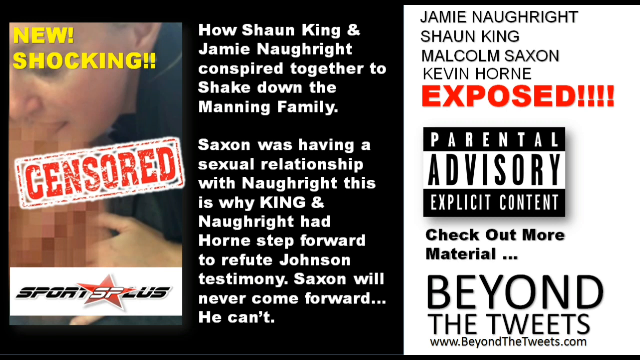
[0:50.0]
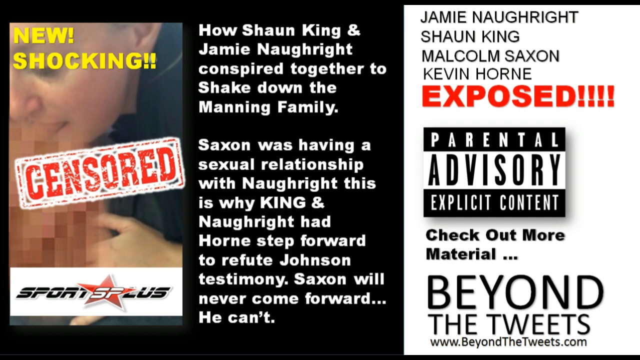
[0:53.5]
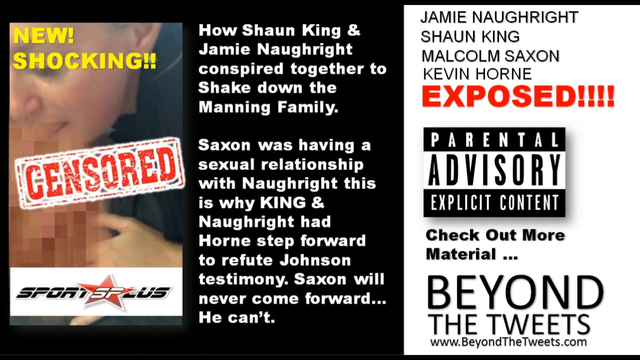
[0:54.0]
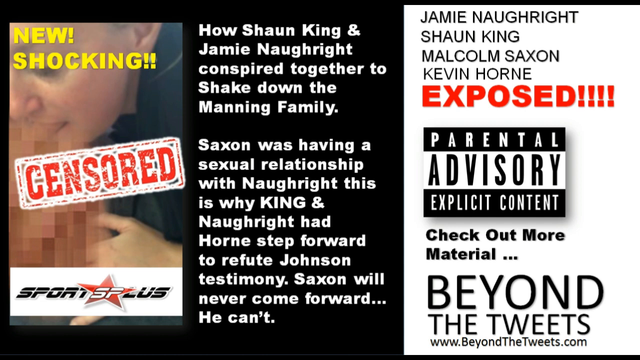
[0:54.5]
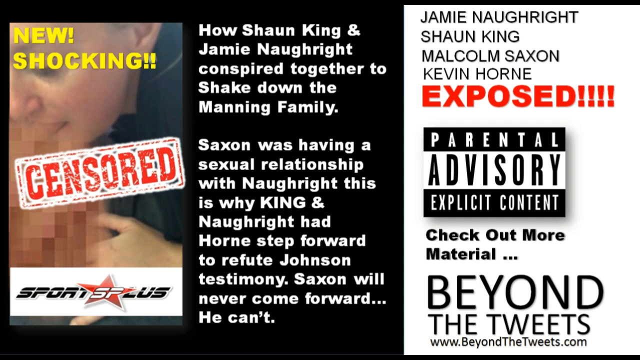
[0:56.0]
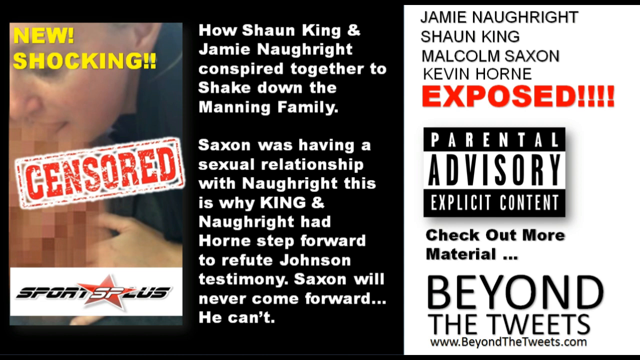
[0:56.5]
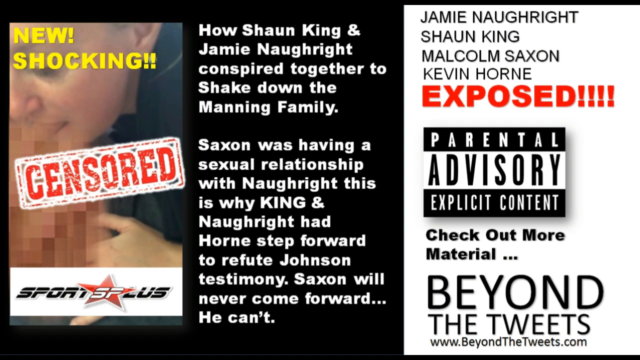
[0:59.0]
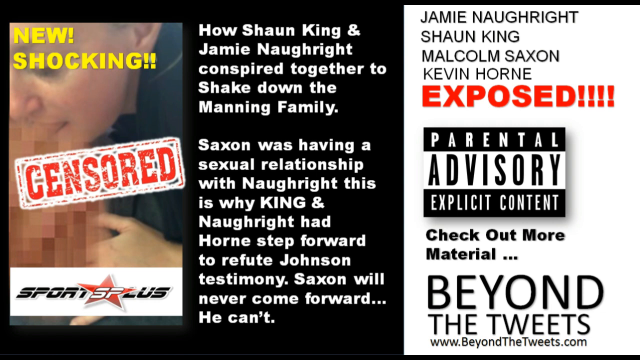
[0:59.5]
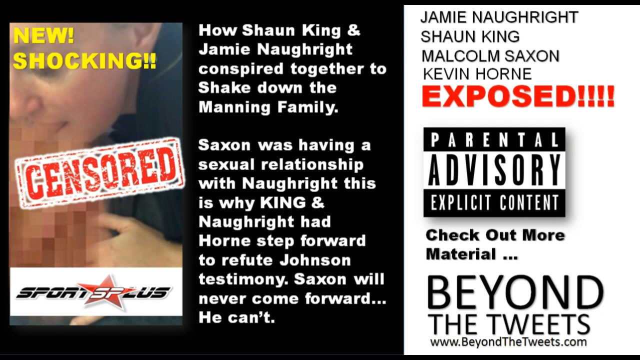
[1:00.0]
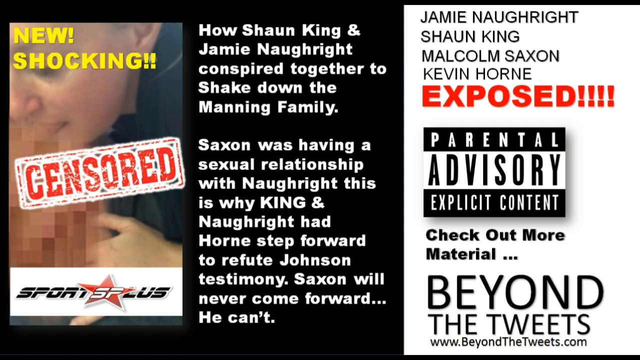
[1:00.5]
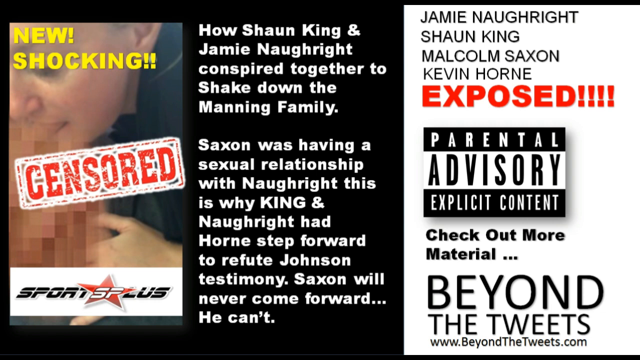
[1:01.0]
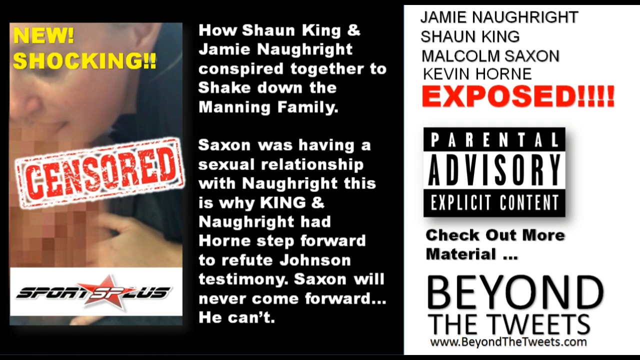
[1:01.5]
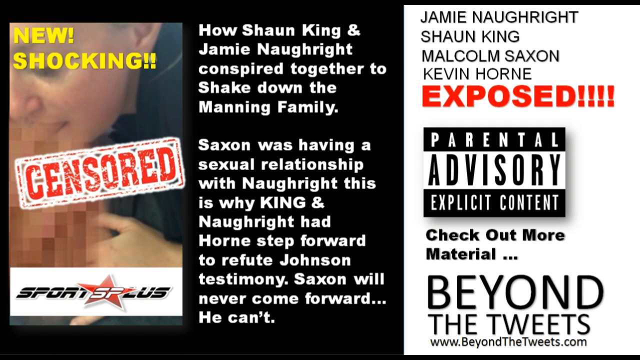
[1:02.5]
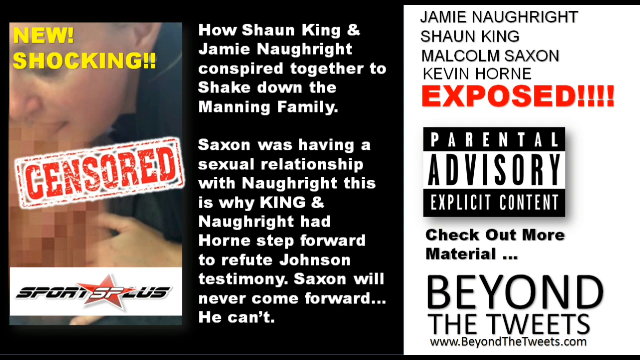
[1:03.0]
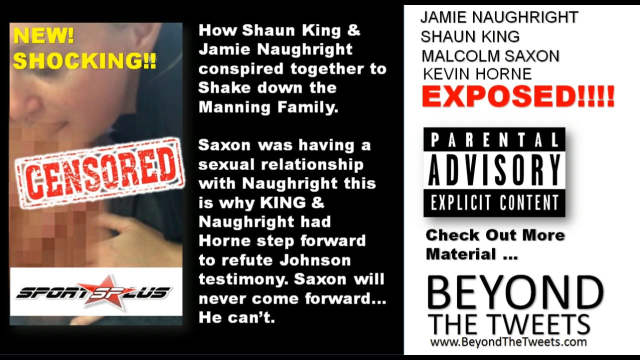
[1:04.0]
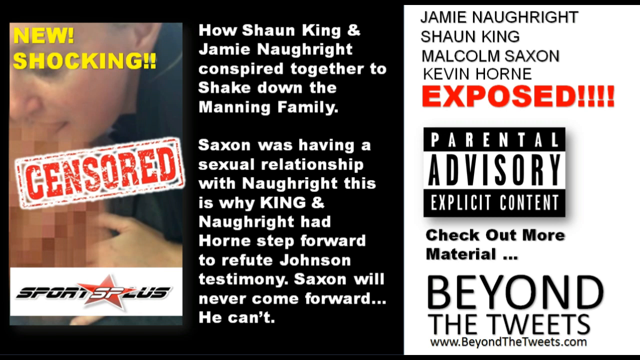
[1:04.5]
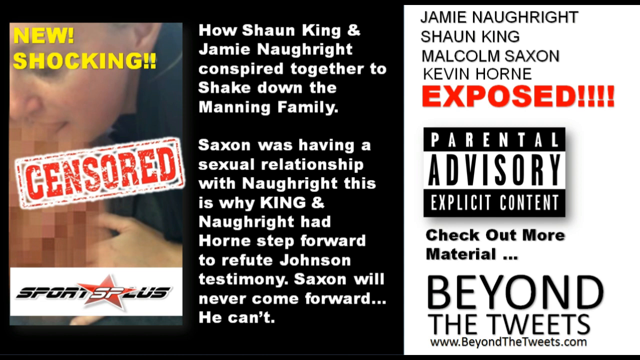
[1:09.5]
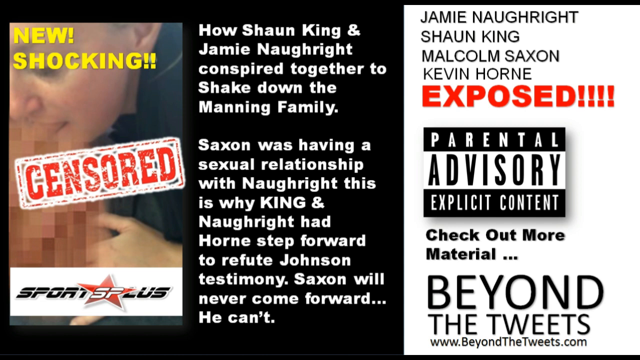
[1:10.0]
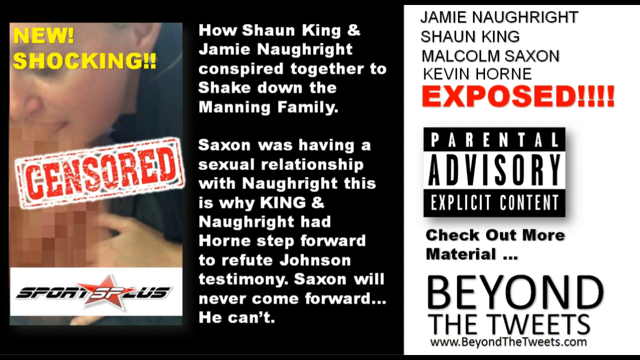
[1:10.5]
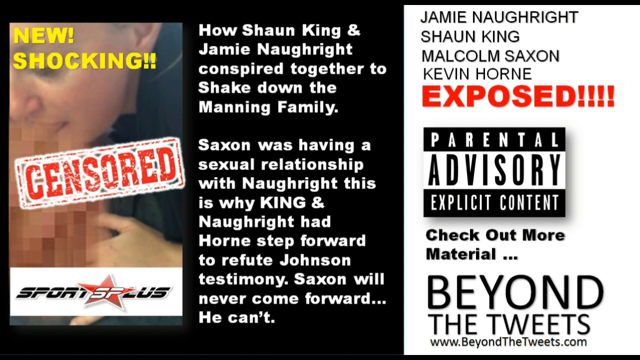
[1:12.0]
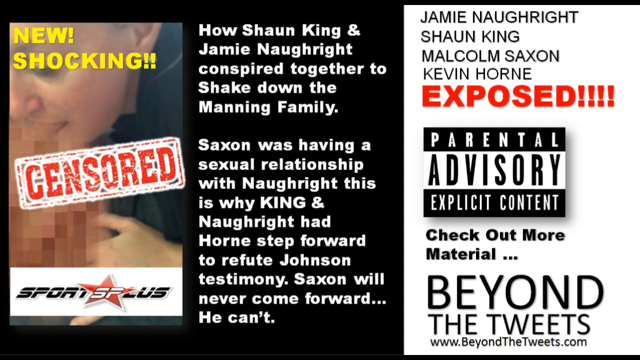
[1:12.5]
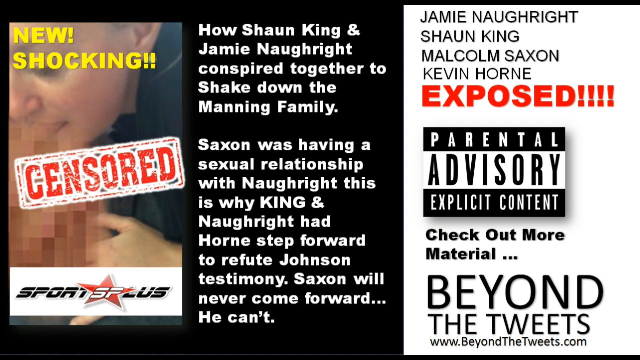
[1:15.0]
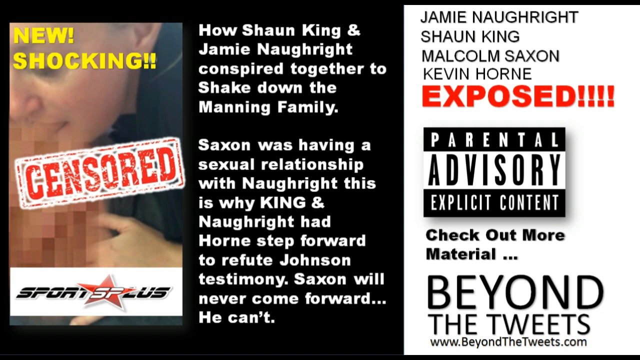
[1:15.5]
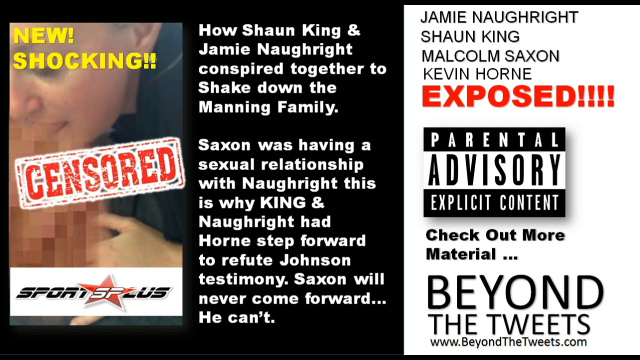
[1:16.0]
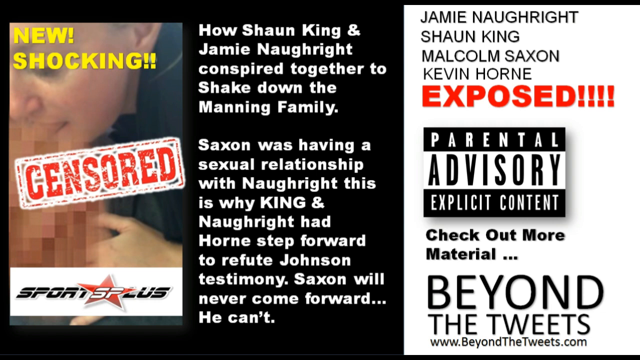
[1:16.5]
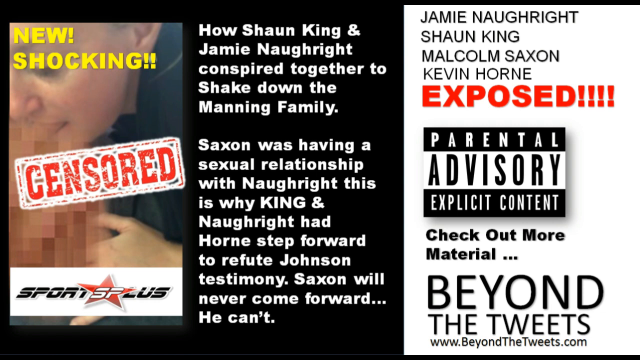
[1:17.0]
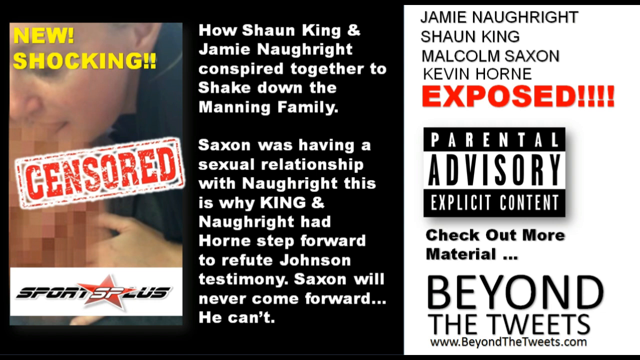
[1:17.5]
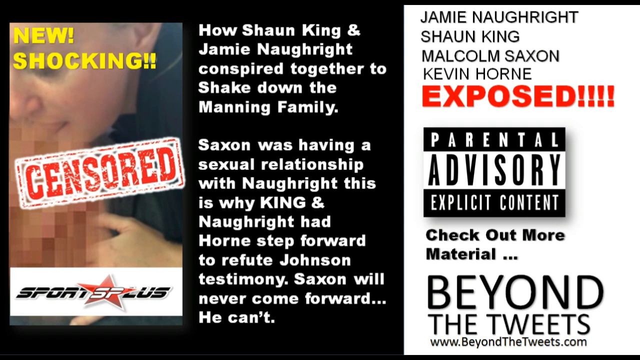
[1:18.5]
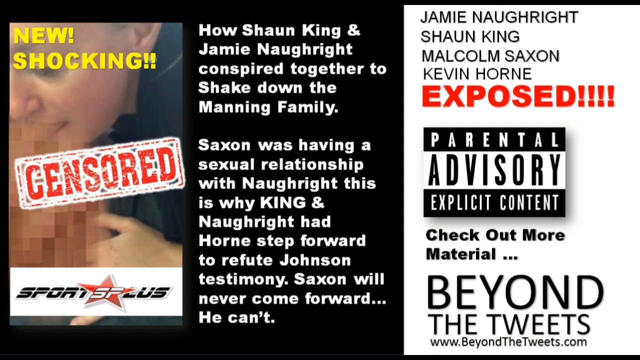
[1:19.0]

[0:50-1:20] The exposed information about Jamie Naughright, Shaun King, Malcolm Saxon, and Kevin Horn continues, presented as leaked information about their personal lives. The text is written in white on a black background and reads that "Shaun King" and others "conspired together to shake down the Manning family," followed by "This is why King and Naughright had one step forward to refute Johnson testimony. Saxon will never come forward. He can't." A hand appears at the far left edge of the screen. The colors on screen are black, red and white: red is used as a warning color, and text appears both in white on black and in black on white.